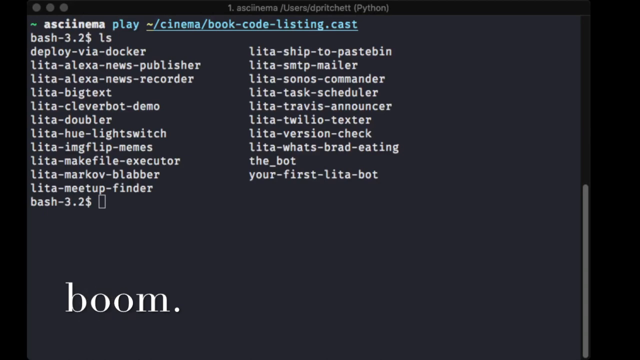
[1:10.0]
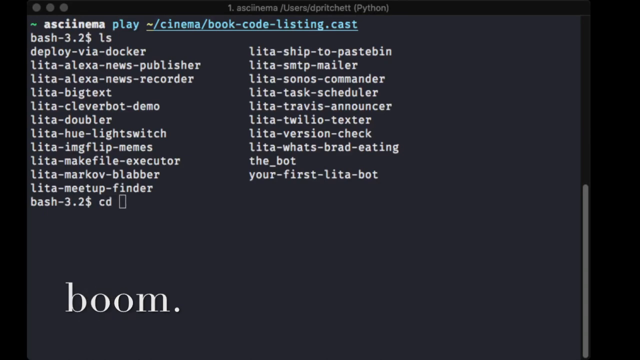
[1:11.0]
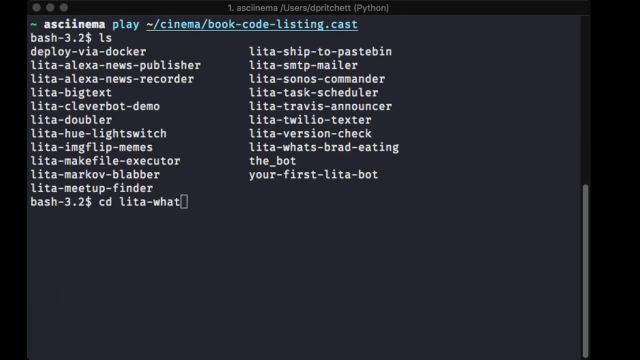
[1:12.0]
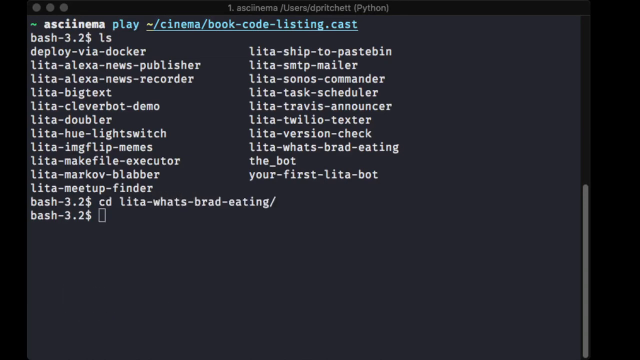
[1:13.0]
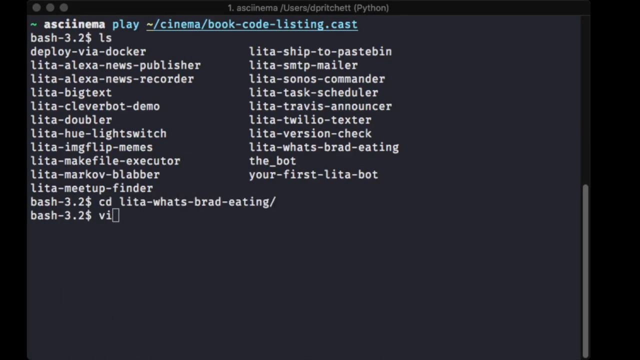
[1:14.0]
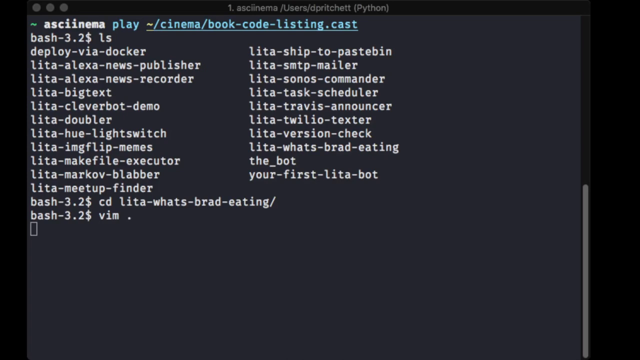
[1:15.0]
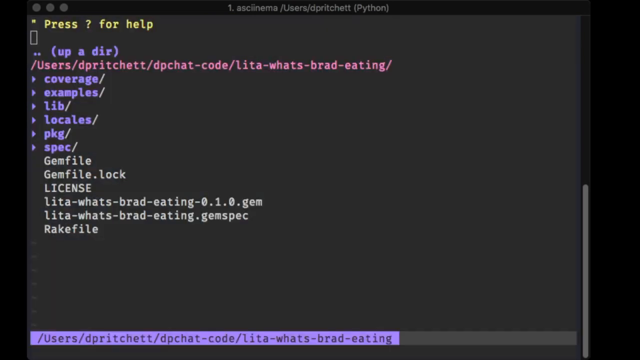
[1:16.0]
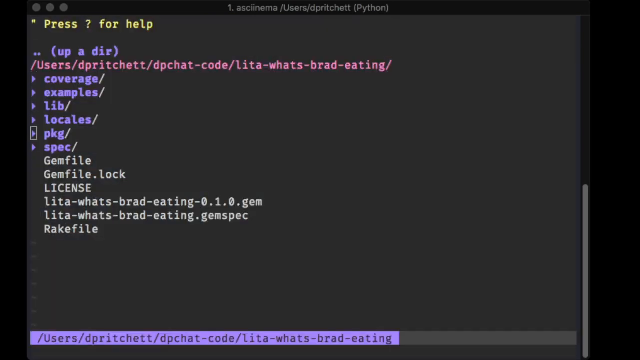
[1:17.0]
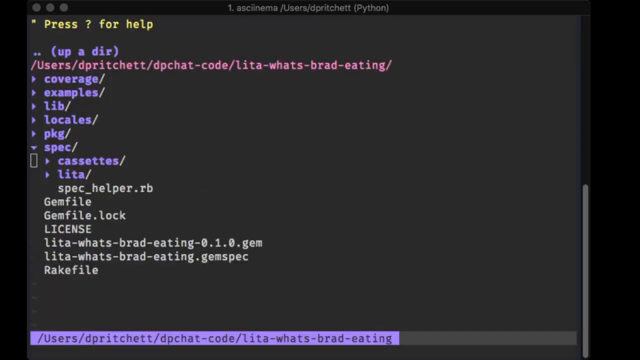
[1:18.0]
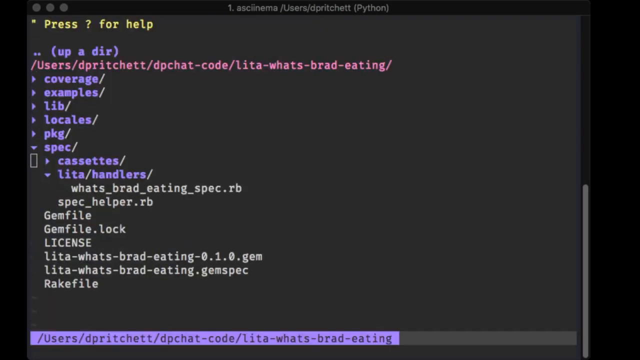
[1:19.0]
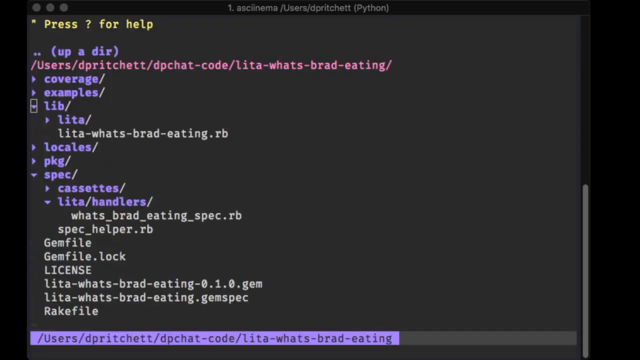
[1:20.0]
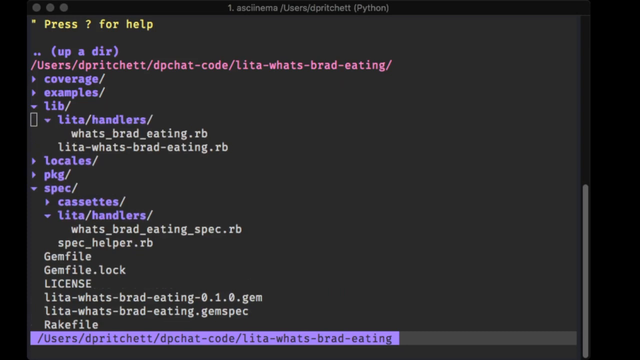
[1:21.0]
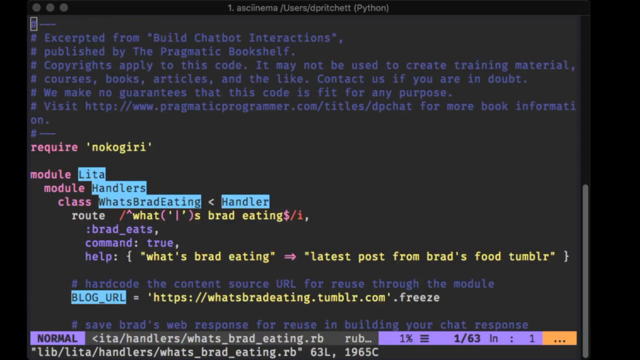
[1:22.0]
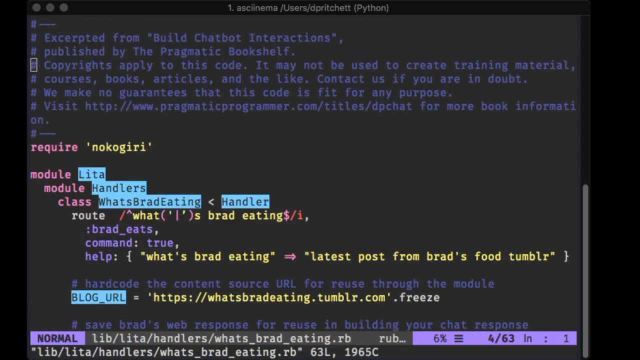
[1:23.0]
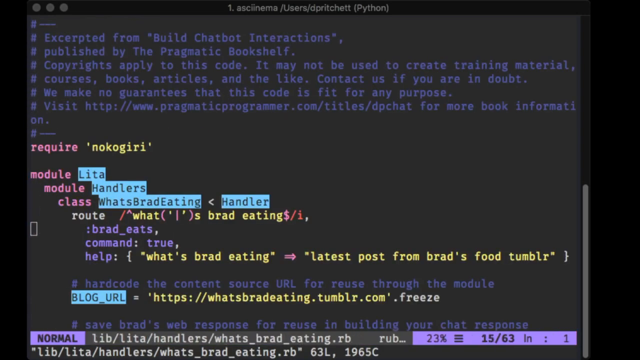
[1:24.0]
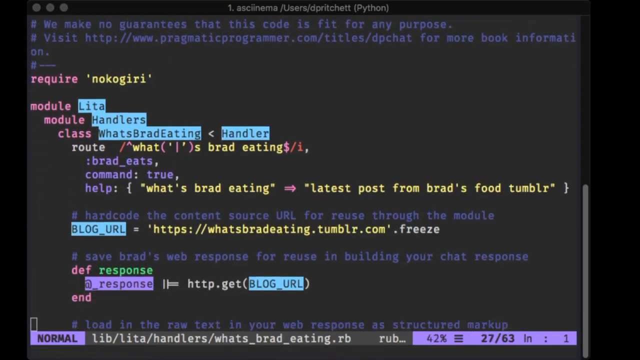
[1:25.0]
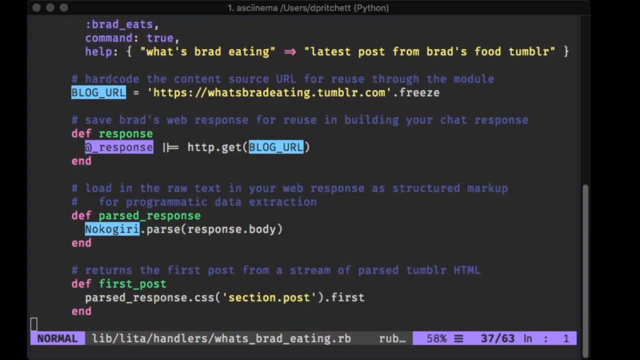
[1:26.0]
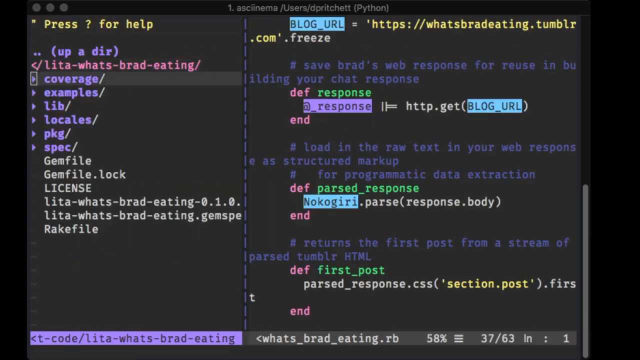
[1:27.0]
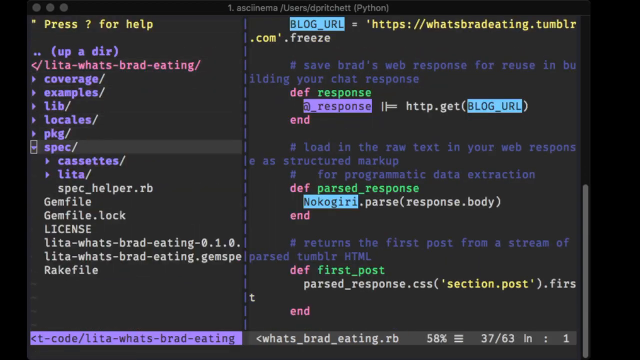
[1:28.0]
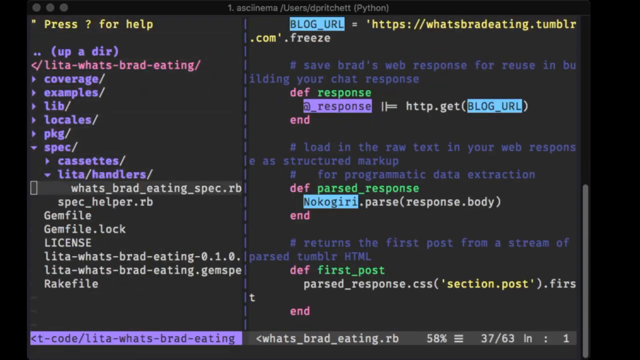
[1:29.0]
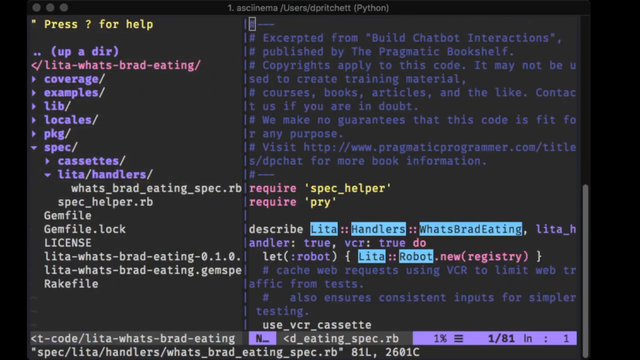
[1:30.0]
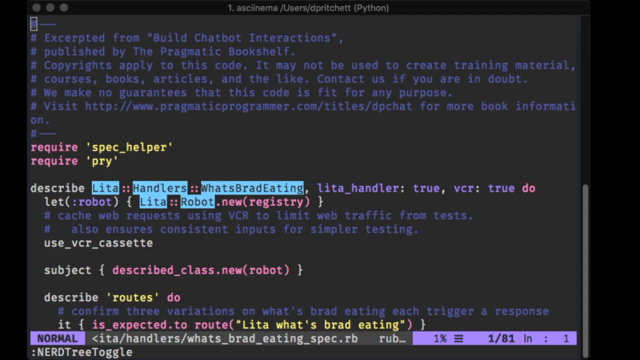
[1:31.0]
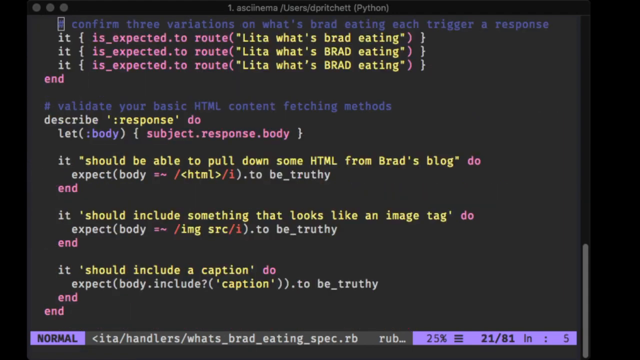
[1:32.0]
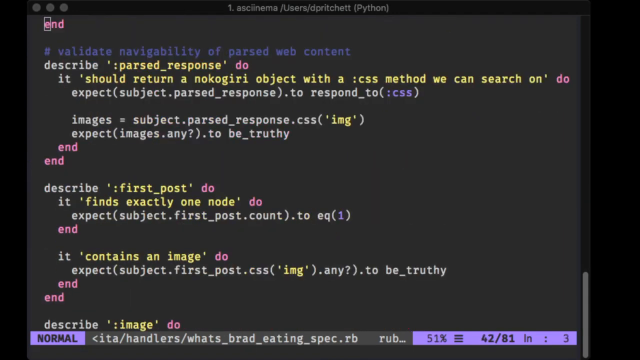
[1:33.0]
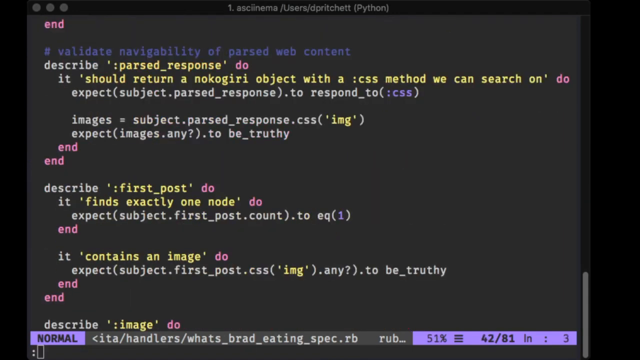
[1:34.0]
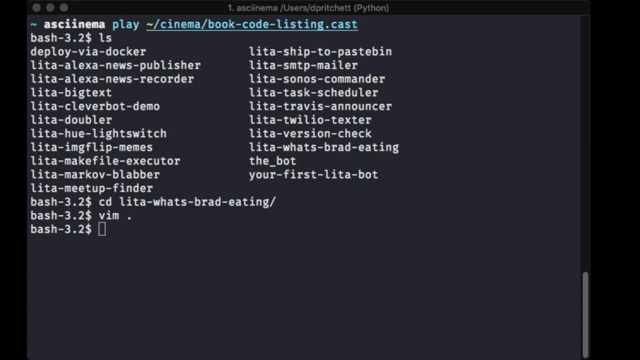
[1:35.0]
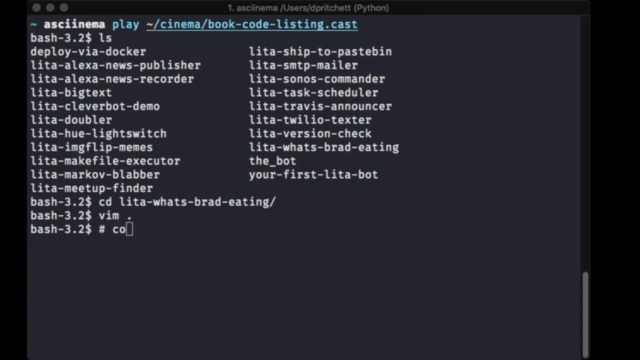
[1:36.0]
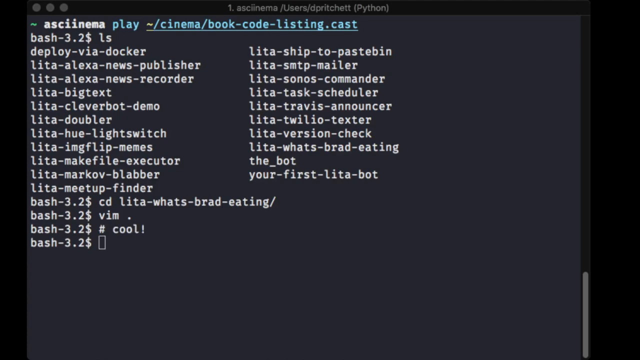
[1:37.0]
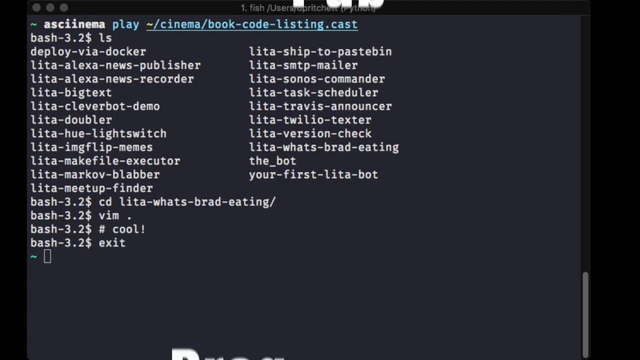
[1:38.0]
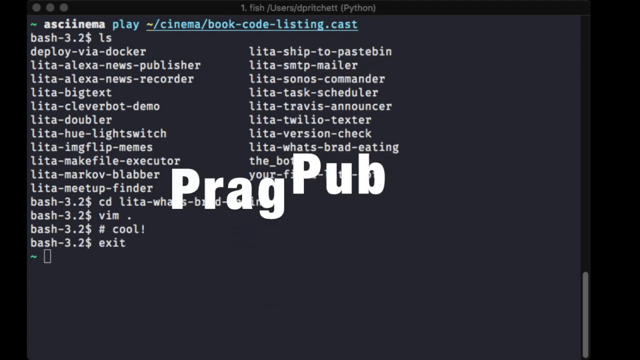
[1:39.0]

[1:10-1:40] Blue text appears, followed by two columns of lists of various Lita items, including "Lita Alexa," "Lita Big Text," "Lita CleverBot Demo," and so forth; there are quite a few of them. At the bottom, in large text, is the word "BOOM." The cursor continues to write text down the page, which transitions to another page of text on a computer monitor screen. The text at the top is yellow, beneath that is lavender, beneath that is pinkish text, then lavender text returns, followed by white text. At the top of this page is the word "Python." It appears to be "DP chat" code, which is written at the bottom of the screen. The cursor continues to pan up and sort of separate the code at the top. The video then moves to a new page of code, where some of the code is highlighted, such as "Lita handlers" and "What's Brad eating?" The cursor scrolls up, and the video transitions to another new page of code, where code continues to be written.